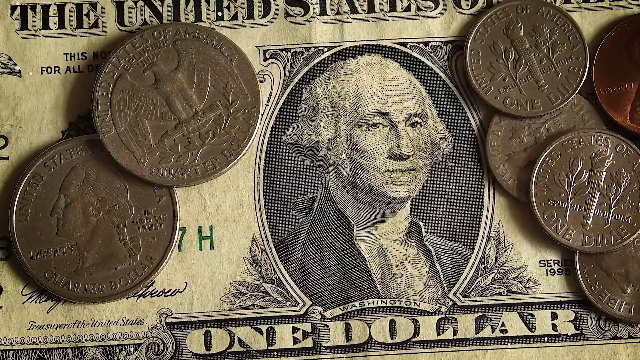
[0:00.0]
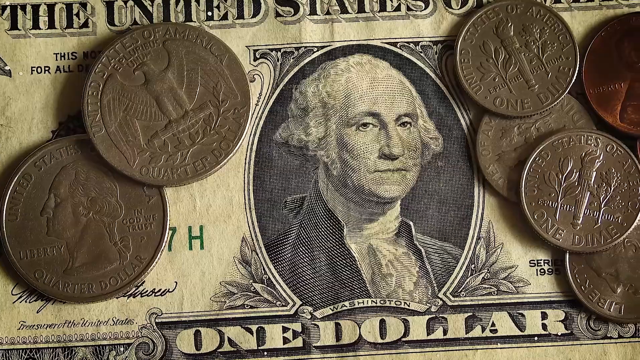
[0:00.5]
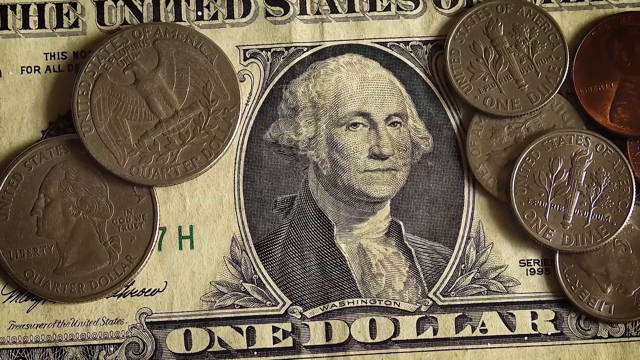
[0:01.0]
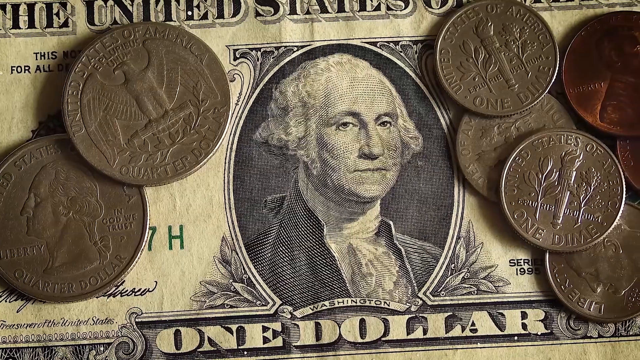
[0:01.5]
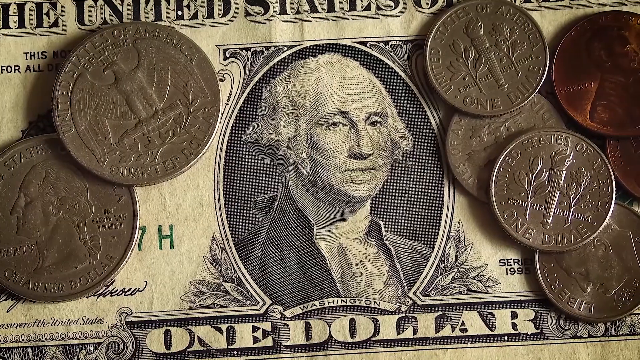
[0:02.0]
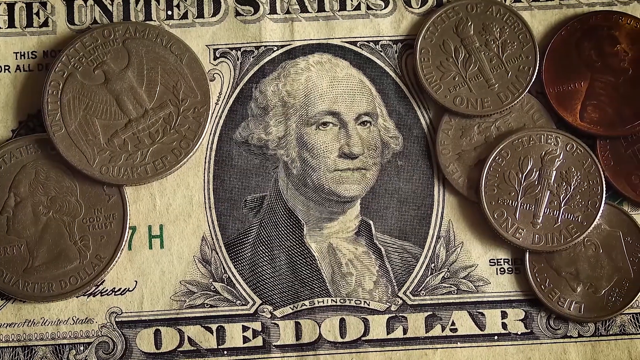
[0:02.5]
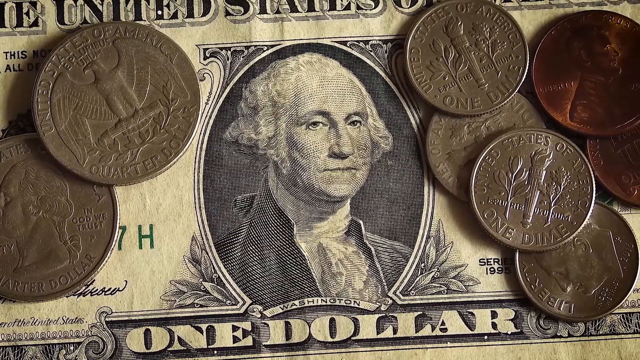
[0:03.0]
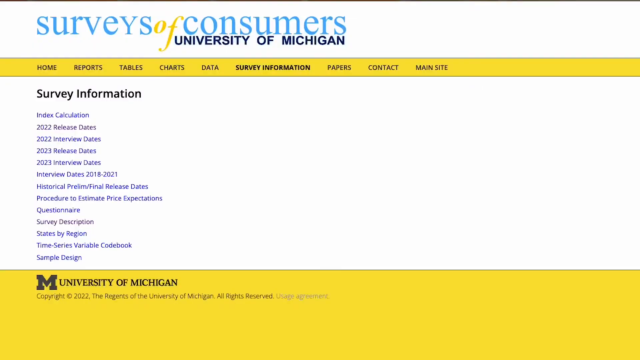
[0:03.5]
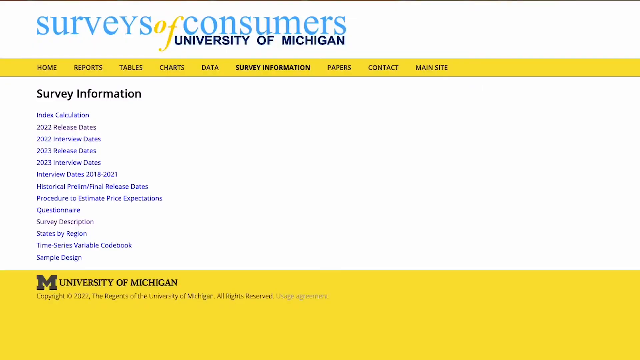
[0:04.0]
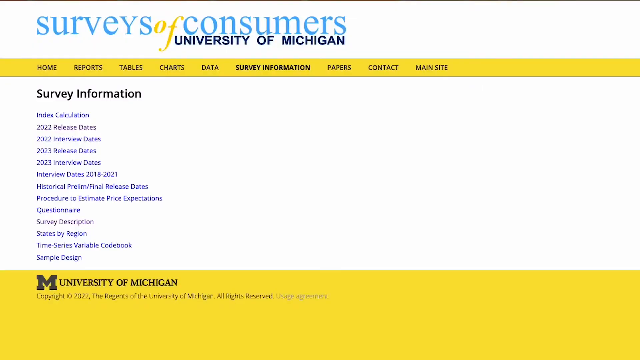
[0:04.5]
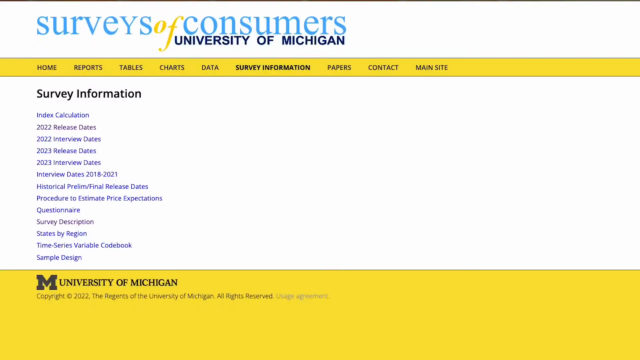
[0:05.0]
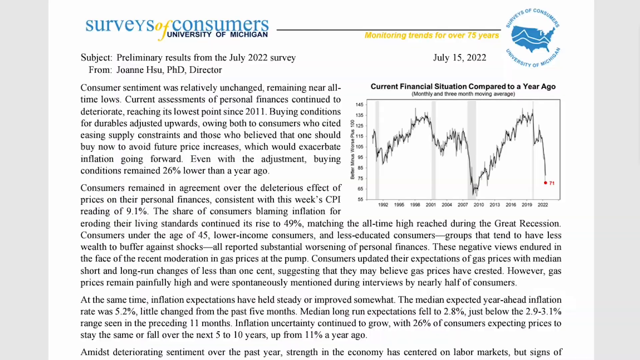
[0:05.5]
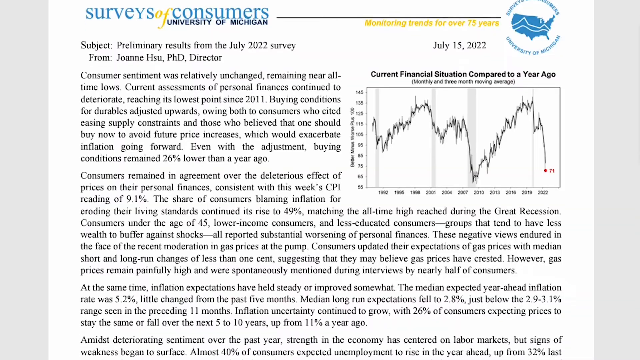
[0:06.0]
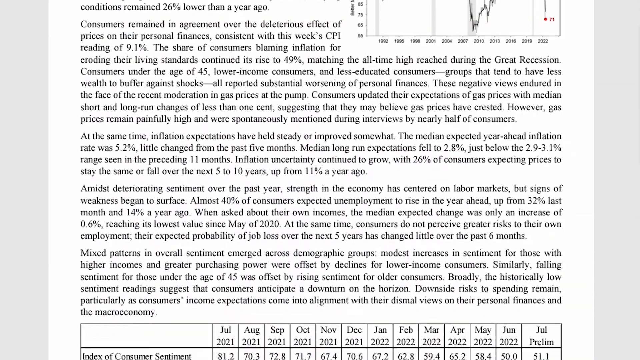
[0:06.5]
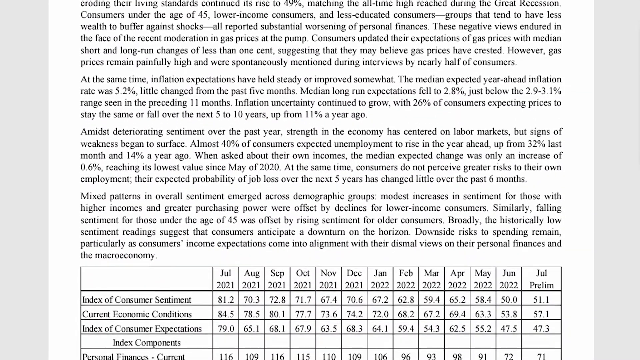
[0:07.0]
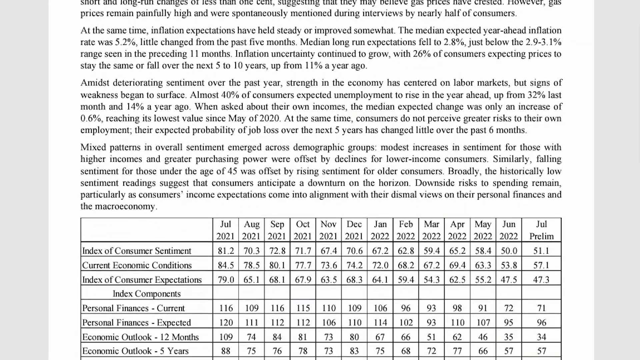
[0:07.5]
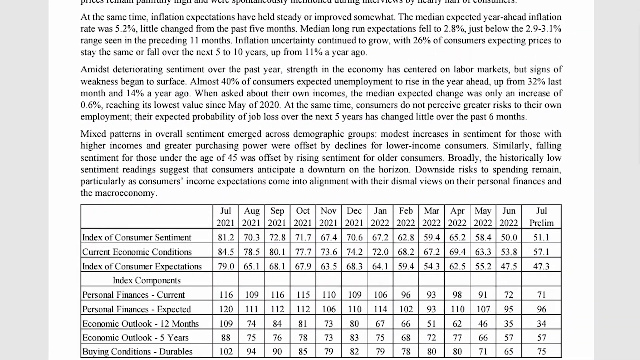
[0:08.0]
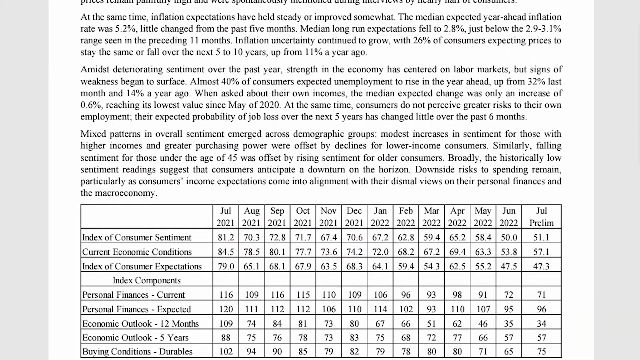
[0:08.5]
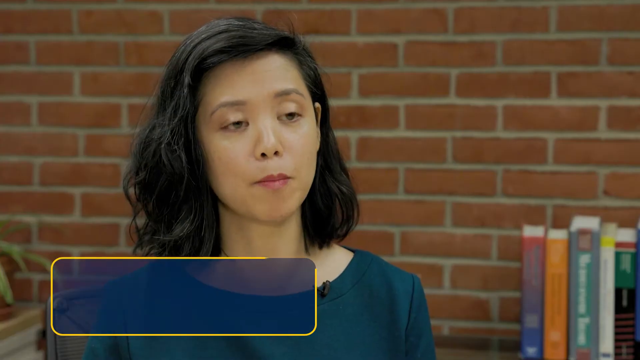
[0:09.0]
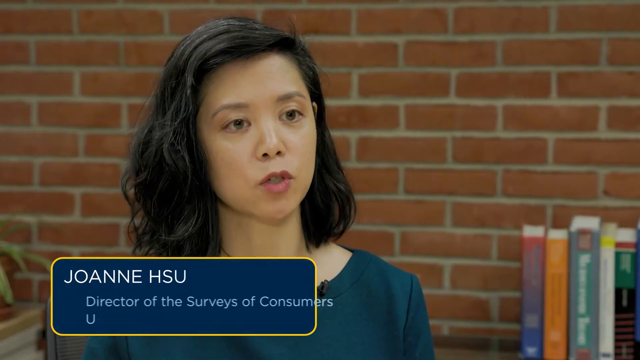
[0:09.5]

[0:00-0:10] The video opens on a close-up of a dollar bill with George Washington front and center. On the left are two quarters: the one slightly on top shows its tail side, and the one below it shows its head side. To the right of George Washington are more coins, including a lot of dimes and some pennies. The view scrolls to the left, and then a screen reads "surveys of consumers, University of Michigan." At the end, a female professor appears.